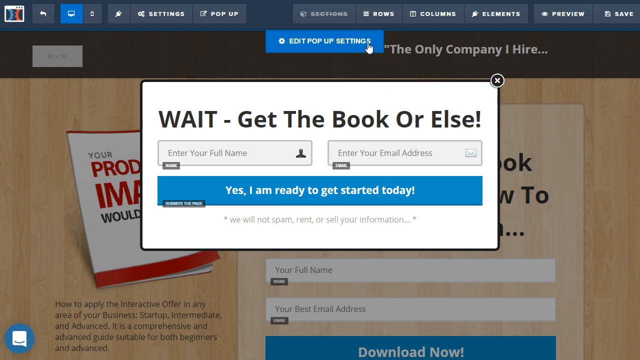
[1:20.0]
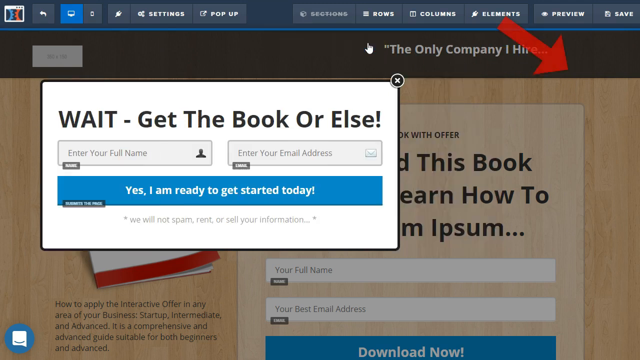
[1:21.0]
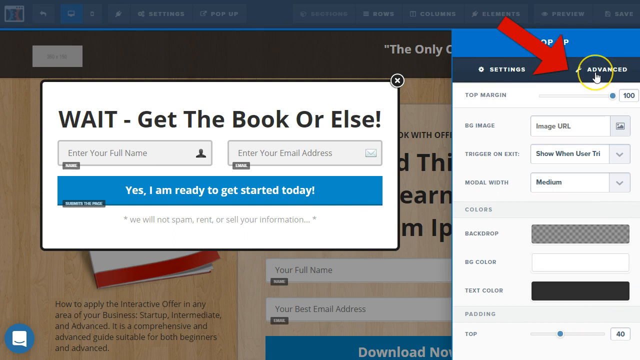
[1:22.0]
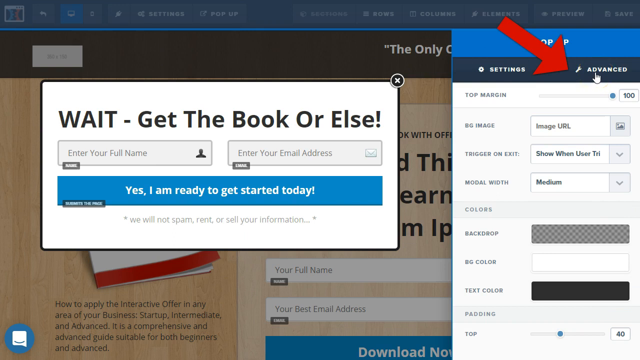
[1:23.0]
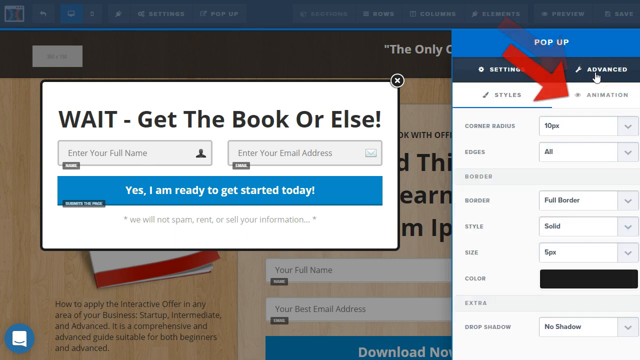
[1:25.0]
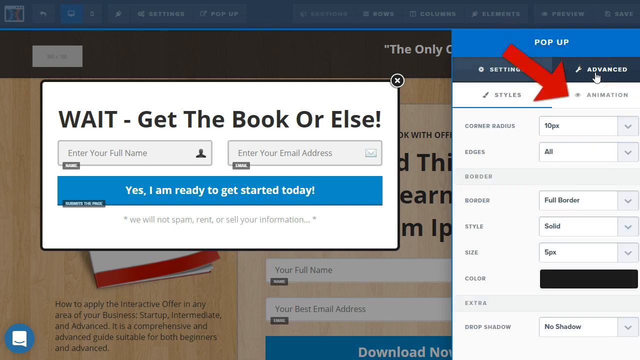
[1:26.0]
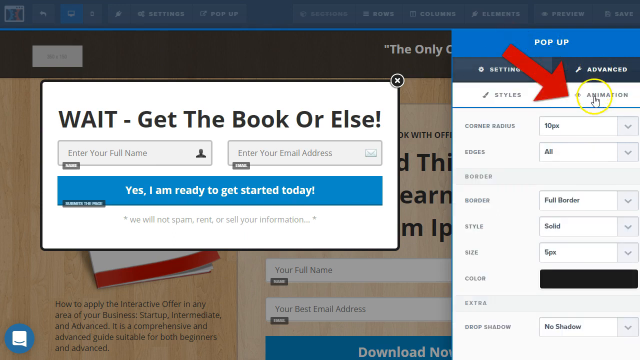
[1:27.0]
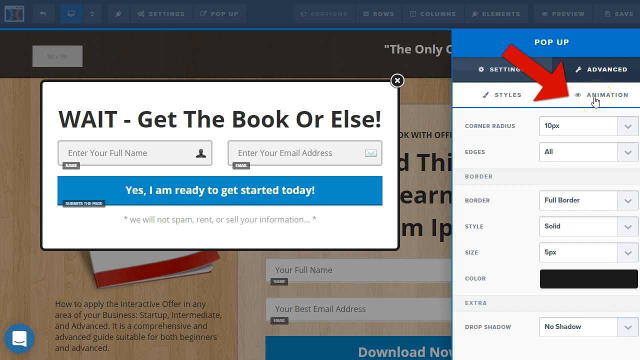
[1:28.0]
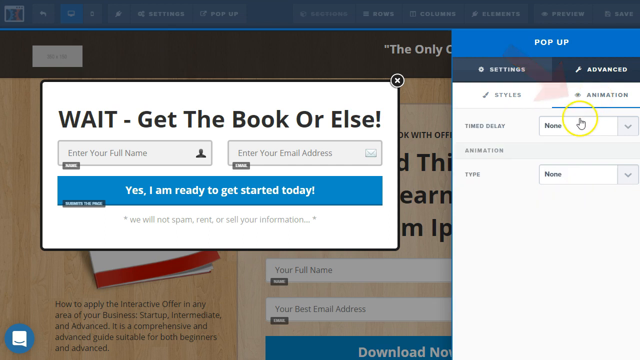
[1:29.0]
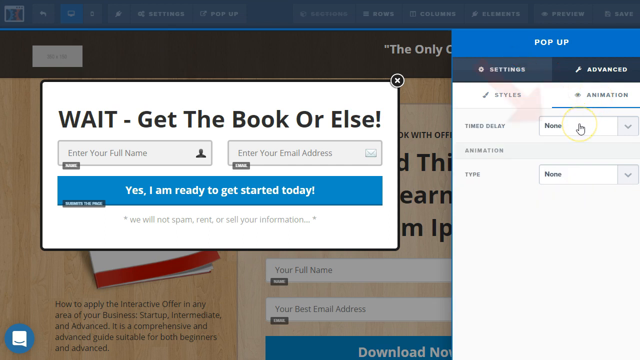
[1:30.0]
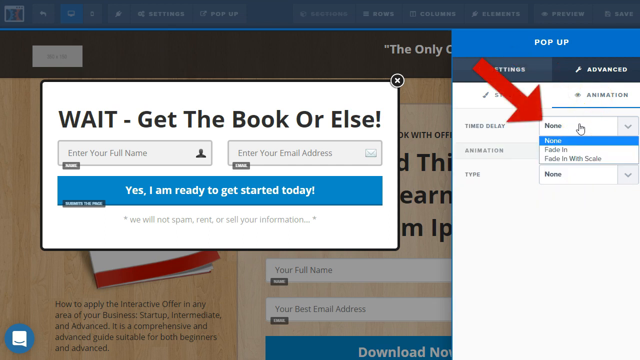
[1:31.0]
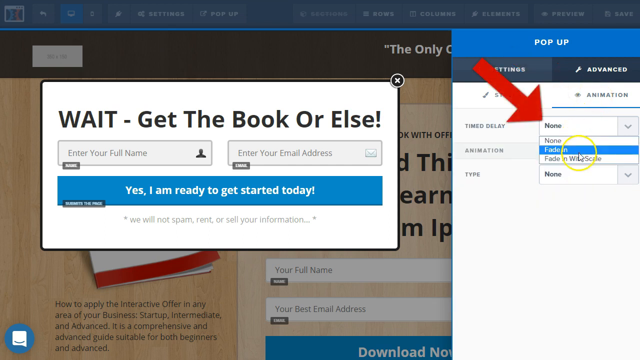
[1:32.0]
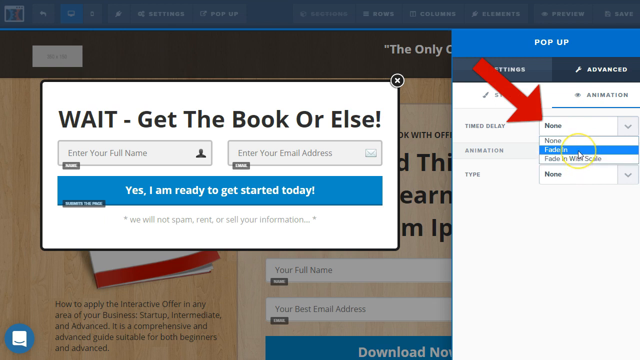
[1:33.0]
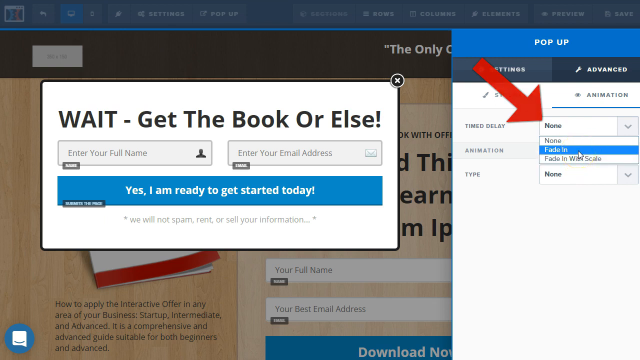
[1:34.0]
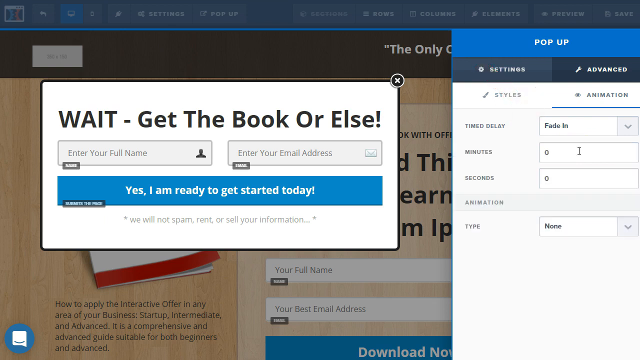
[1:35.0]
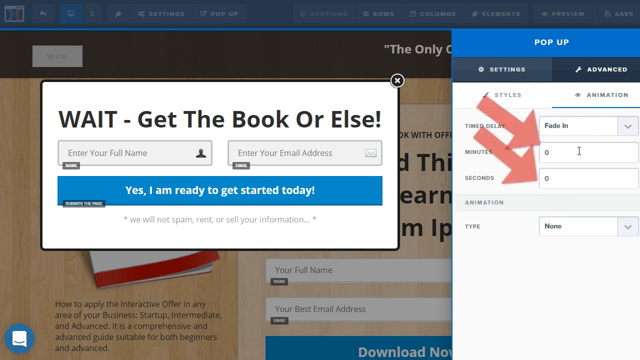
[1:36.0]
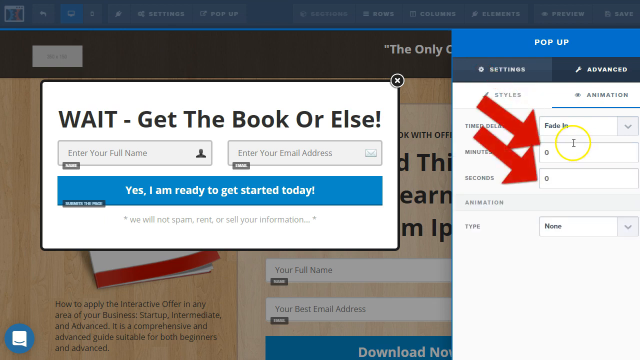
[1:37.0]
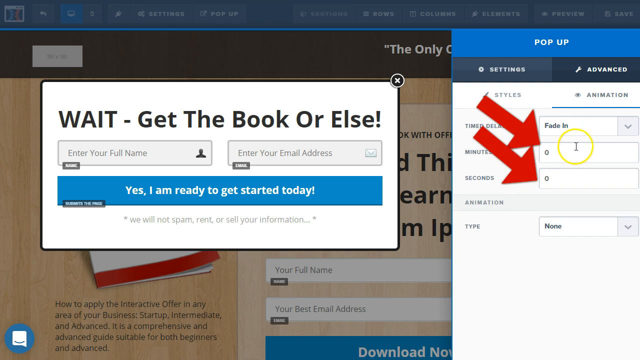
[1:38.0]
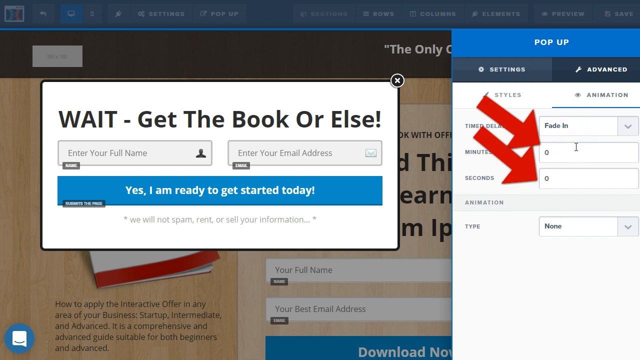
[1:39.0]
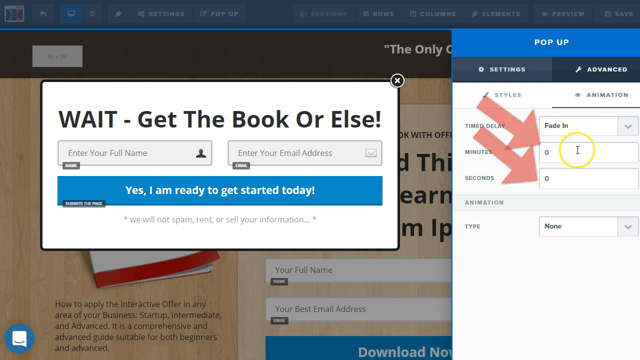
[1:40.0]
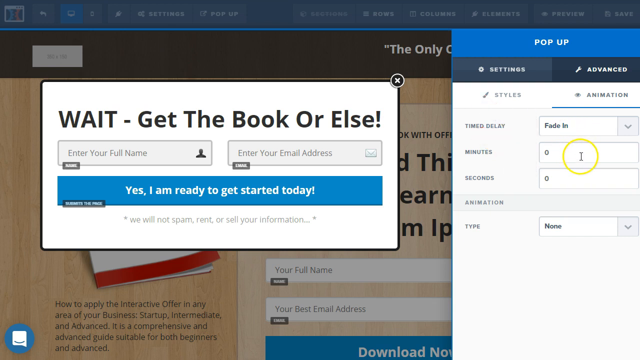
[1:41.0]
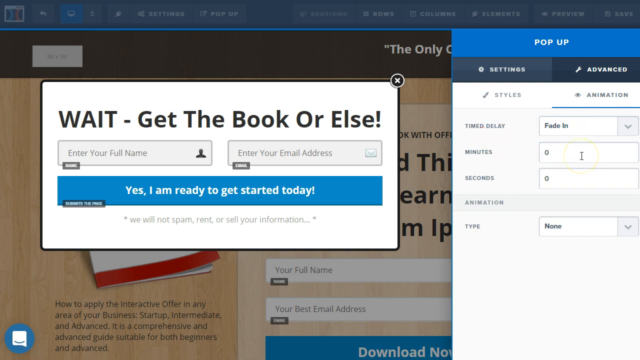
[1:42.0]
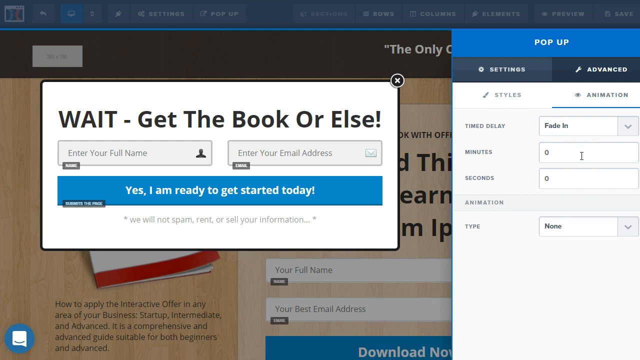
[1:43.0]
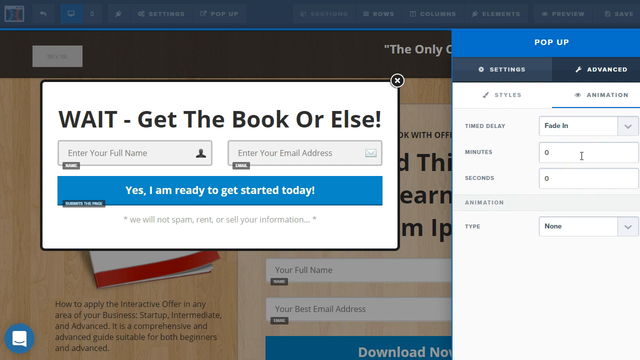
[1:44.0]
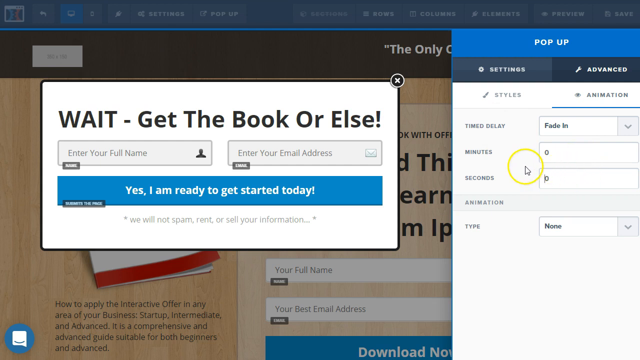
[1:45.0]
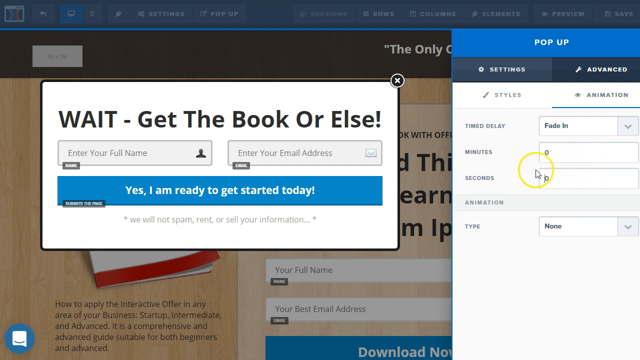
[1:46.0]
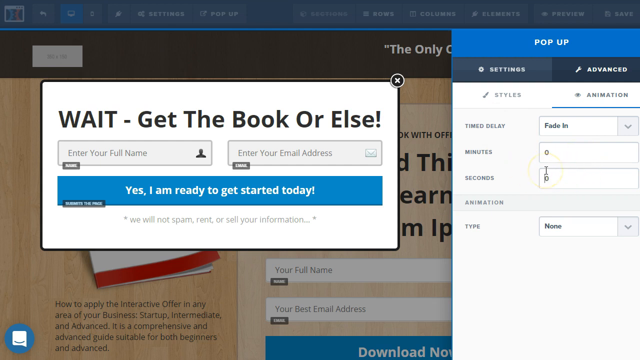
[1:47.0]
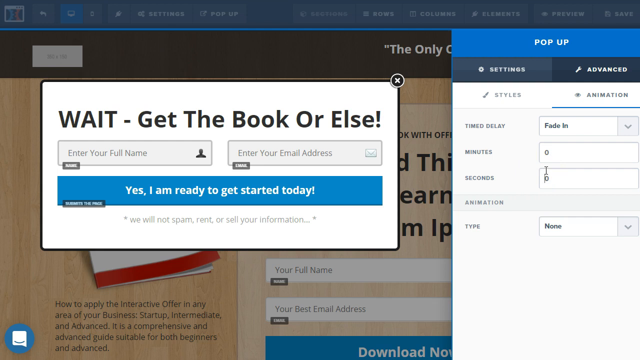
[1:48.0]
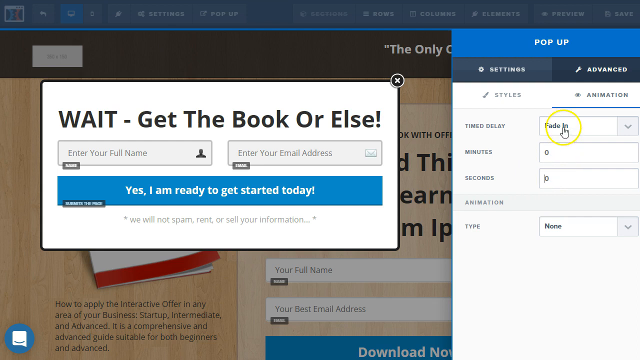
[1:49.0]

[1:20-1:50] A pop-up is on a page, and at the top it says "edit pop-up settings". The pop-up says "wait, get the book or else", with fields for full name and e-mail address and a long, skinny blue box to click that says "yes, I am ready to get started today". The person clicks on "advanced", which brings up another page showing "animation"; the delayed time is set to "none", and they switch it to "fade in". It then asks for how many minutes, and two red arrows point down. For the fade in, the cursor moves near where it says zero, and the seconds are at zero. They then go up and click on the word "none" instead of having a fade in after a set time.